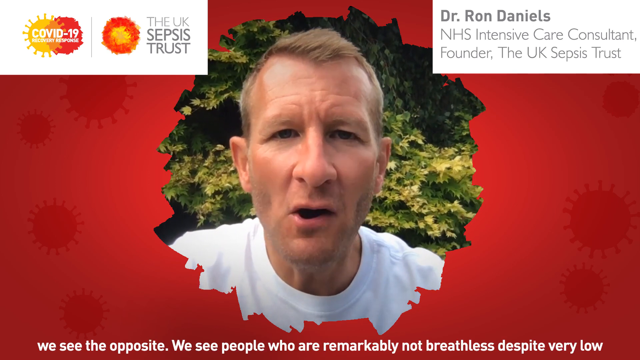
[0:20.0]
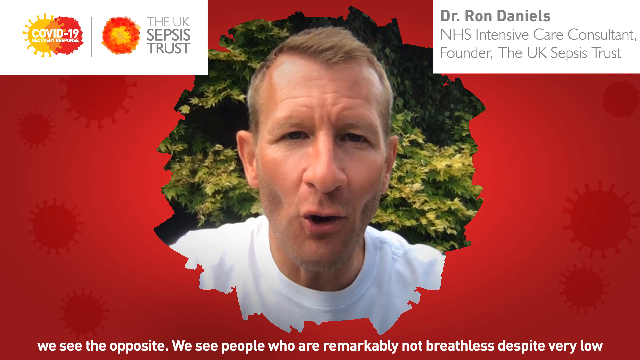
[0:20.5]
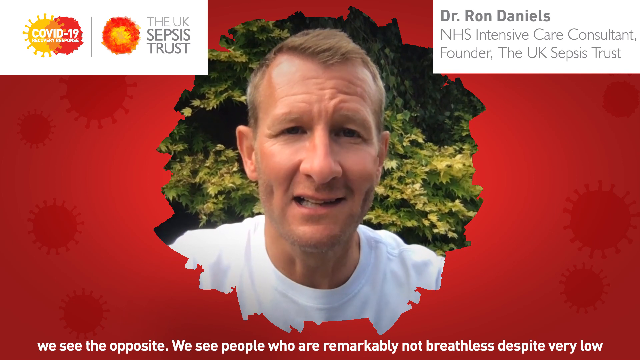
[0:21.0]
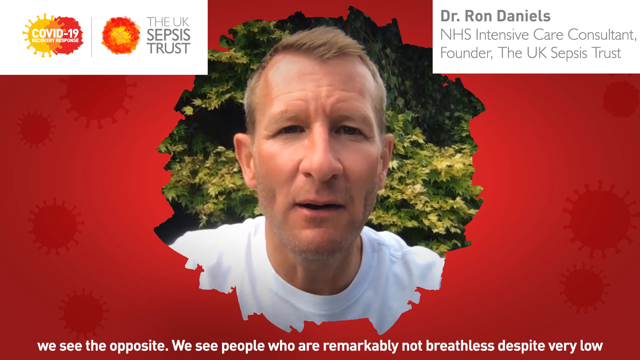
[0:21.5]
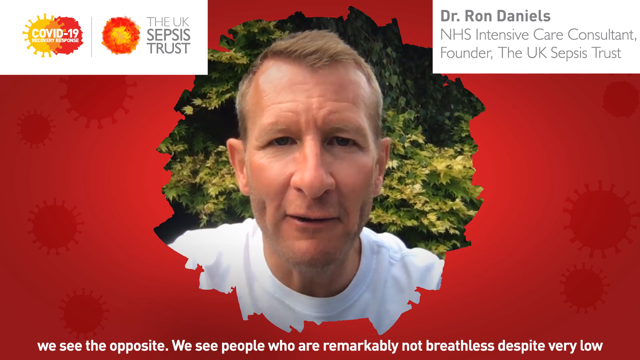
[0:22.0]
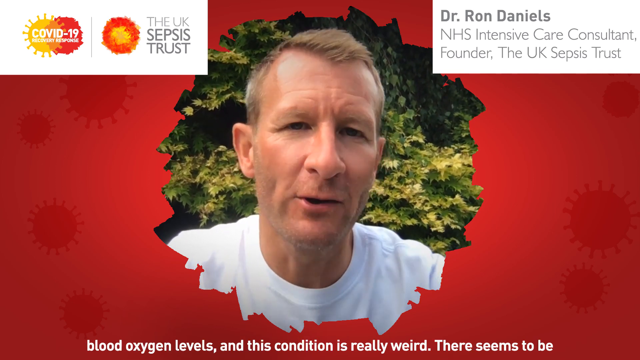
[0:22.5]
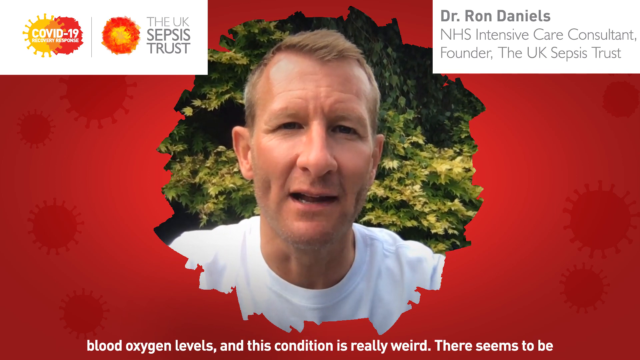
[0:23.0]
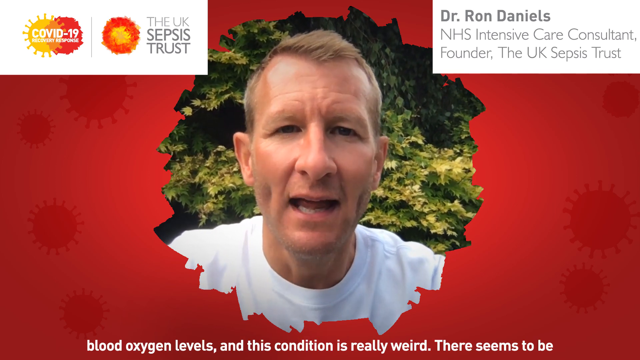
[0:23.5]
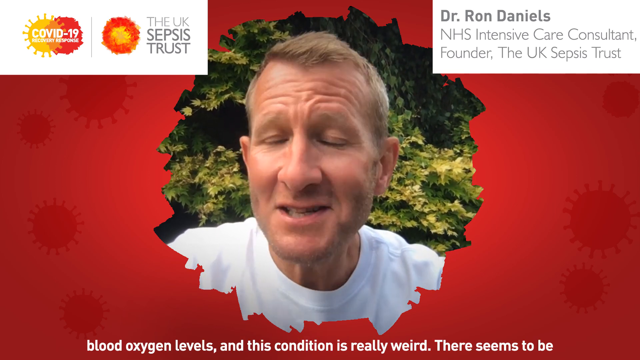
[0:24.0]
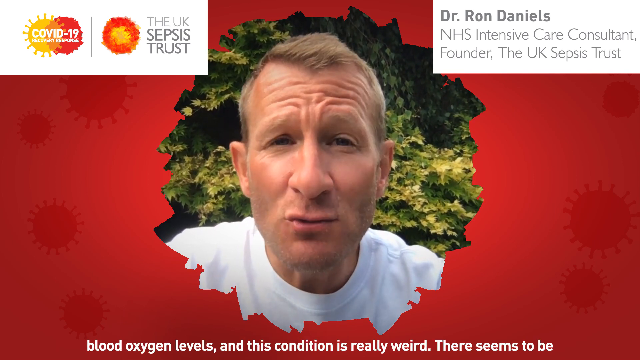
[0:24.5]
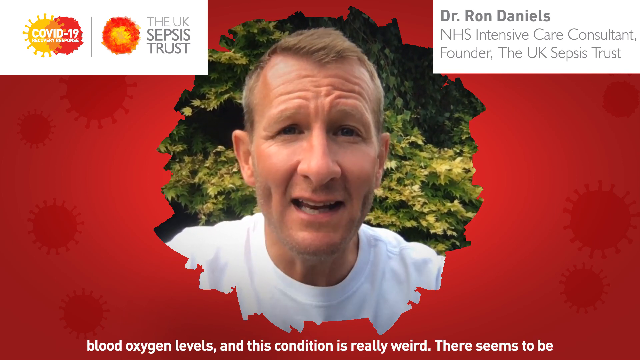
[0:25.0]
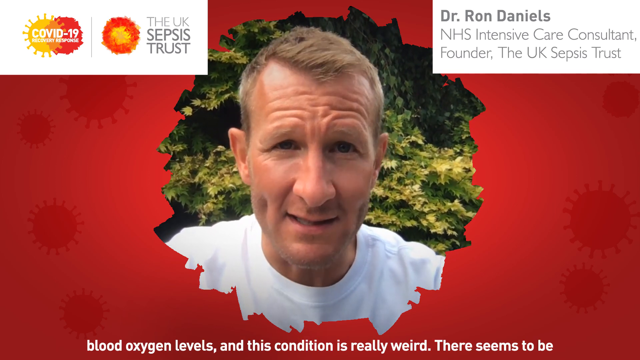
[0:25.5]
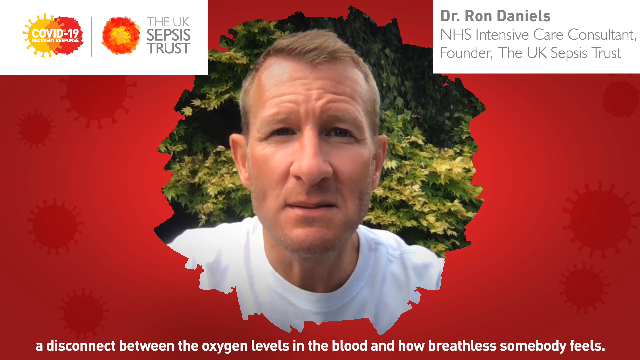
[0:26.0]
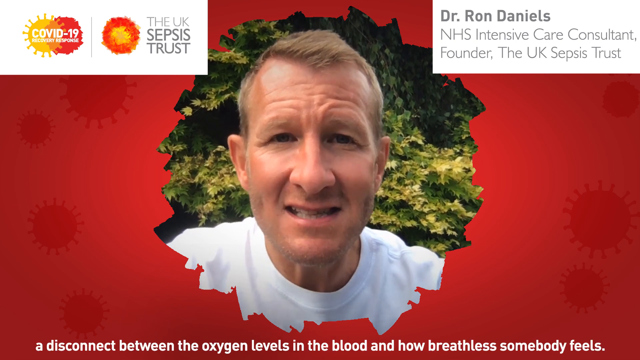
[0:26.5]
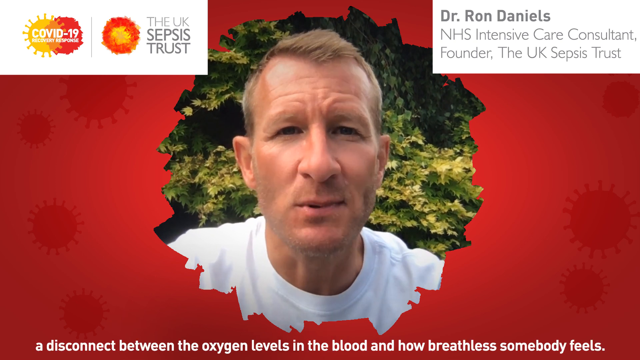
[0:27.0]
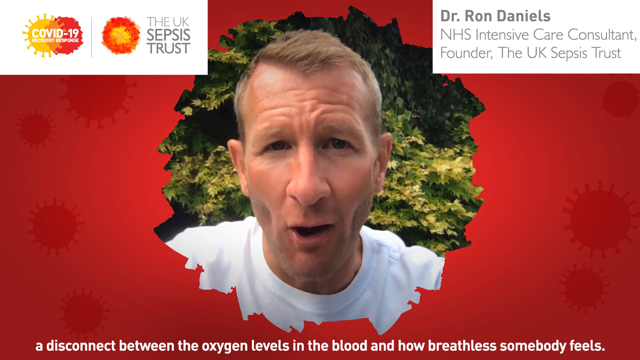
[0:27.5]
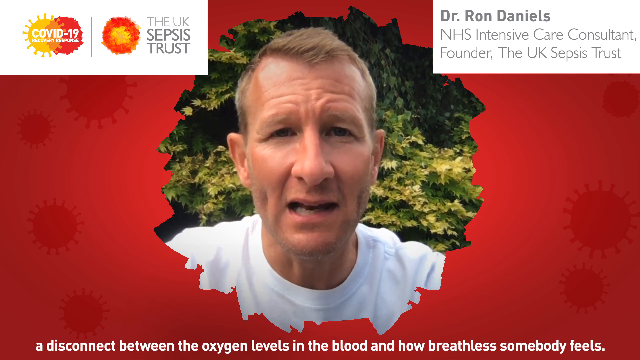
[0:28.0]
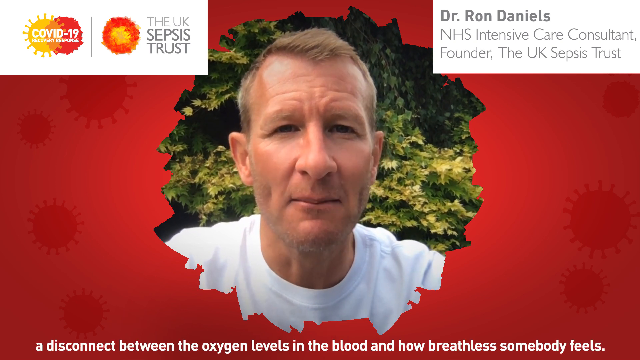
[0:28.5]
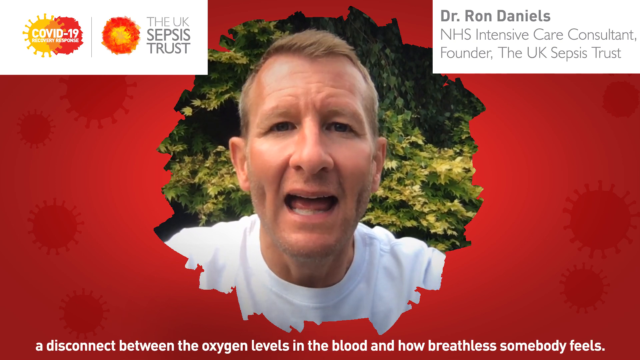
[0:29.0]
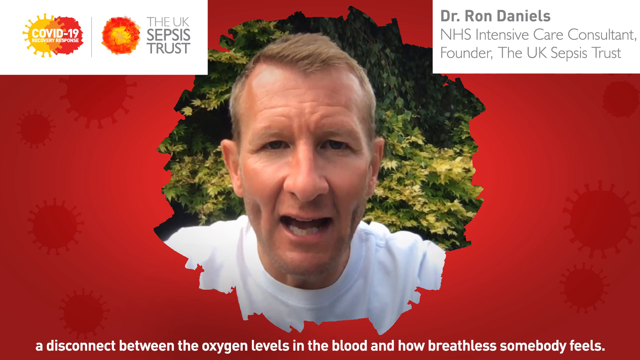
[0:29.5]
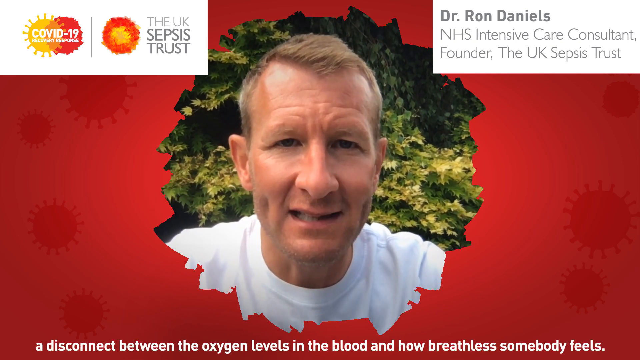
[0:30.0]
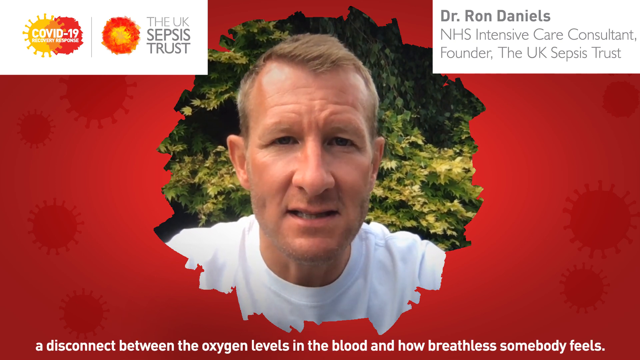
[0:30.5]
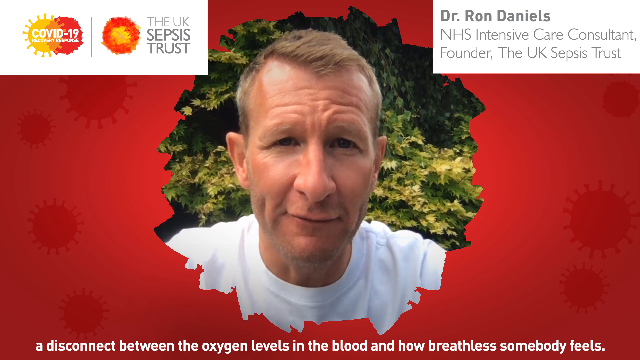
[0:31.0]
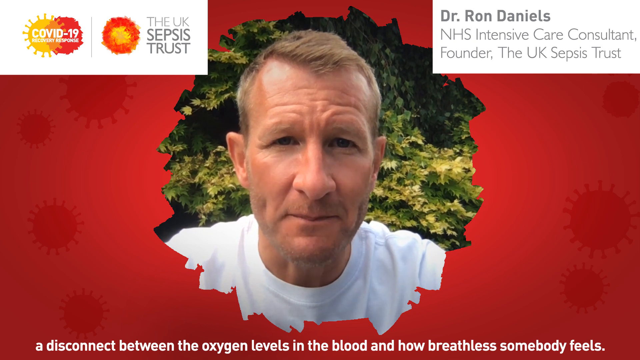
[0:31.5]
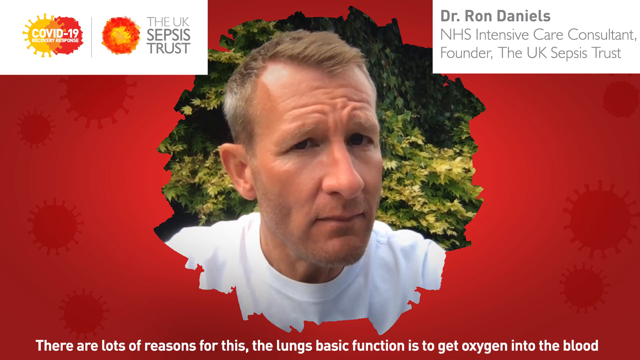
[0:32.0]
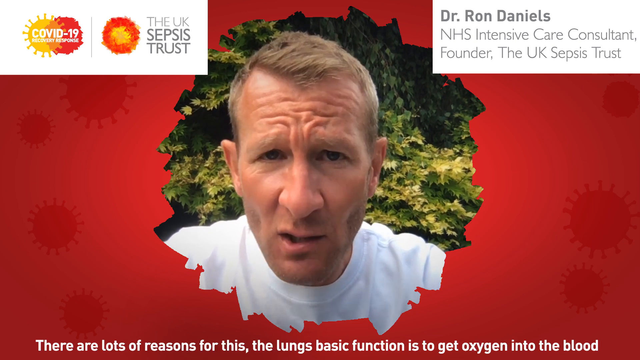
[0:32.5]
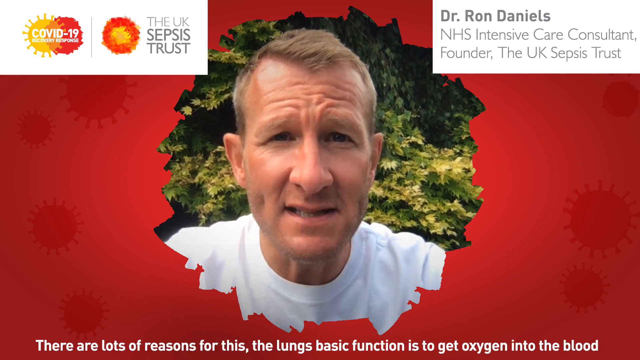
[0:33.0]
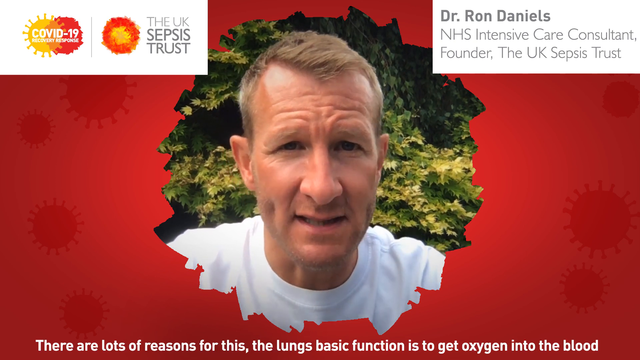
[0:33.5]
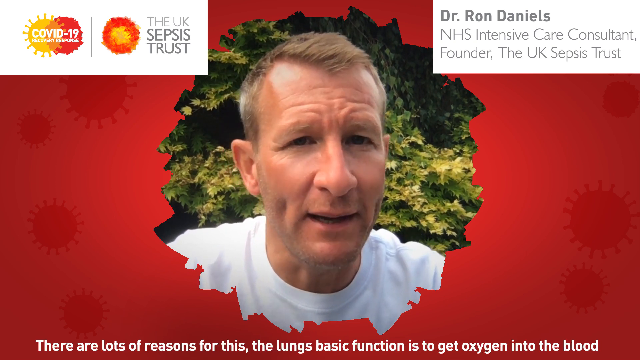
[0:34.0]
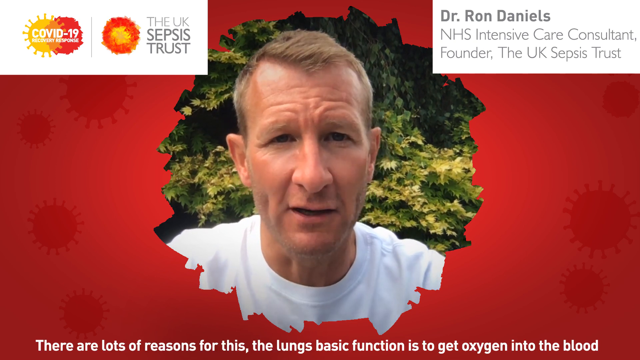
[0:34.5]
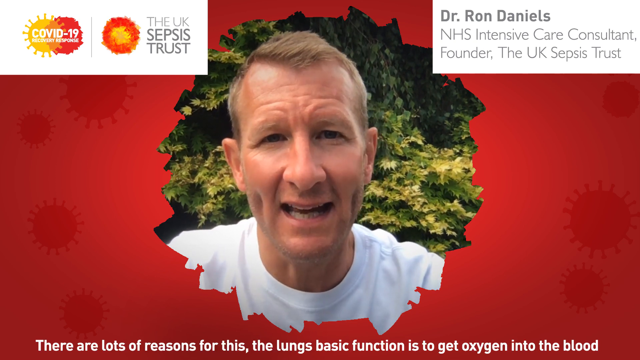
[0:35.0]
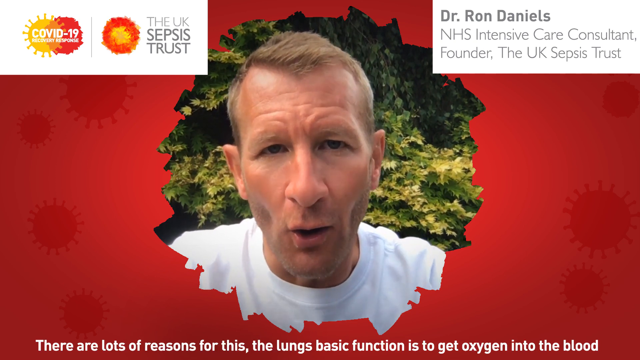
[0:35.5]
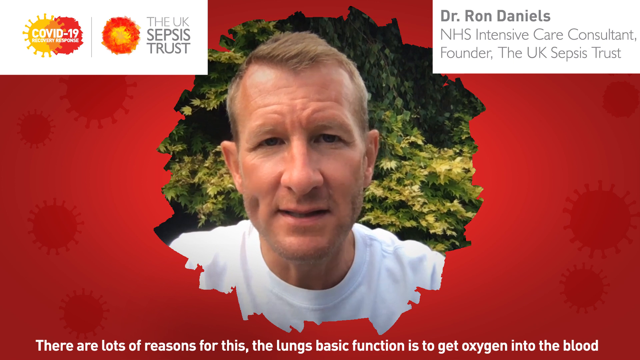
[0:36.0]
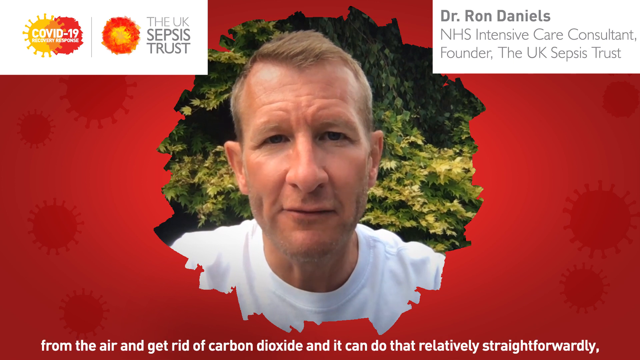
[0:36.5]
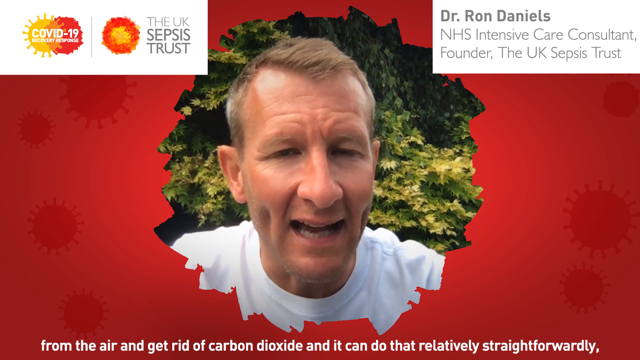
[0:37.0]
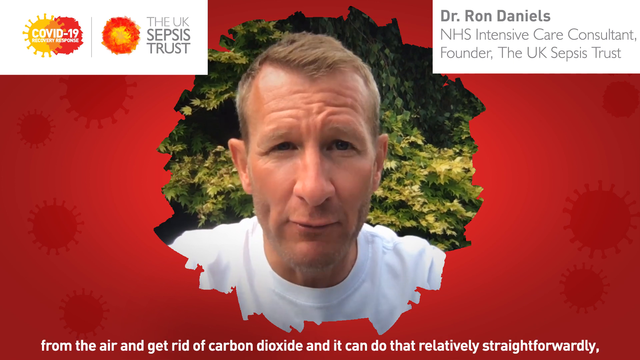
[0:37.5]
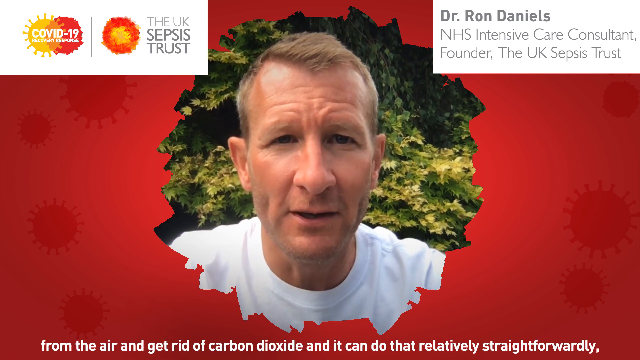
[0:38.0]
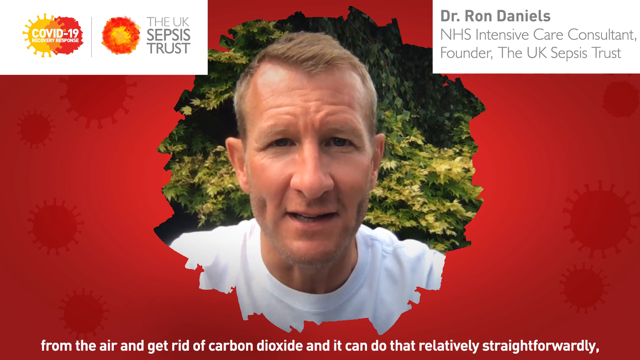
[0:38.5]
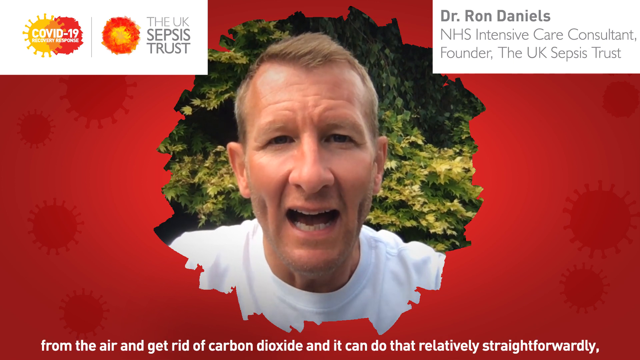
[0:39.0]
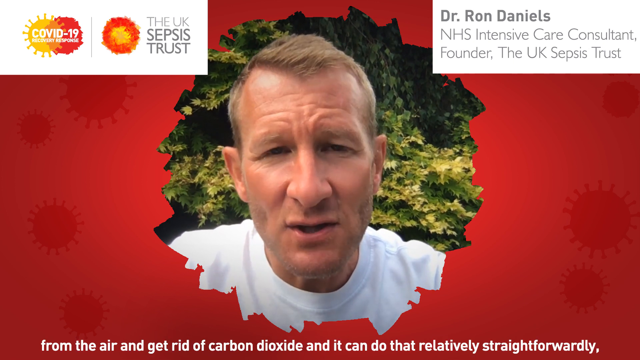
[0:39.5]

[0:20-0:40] The doctor talks in a very animated way, his mouth moving fairly rapidly as he speaks fairly quickly. All the area around him is the red background with sort of a cutout for his head, and this remains the whole time he is talking.